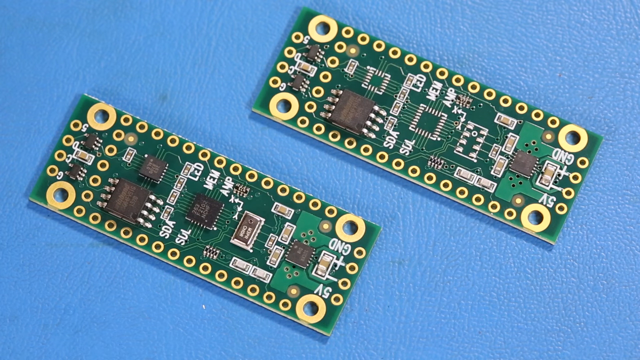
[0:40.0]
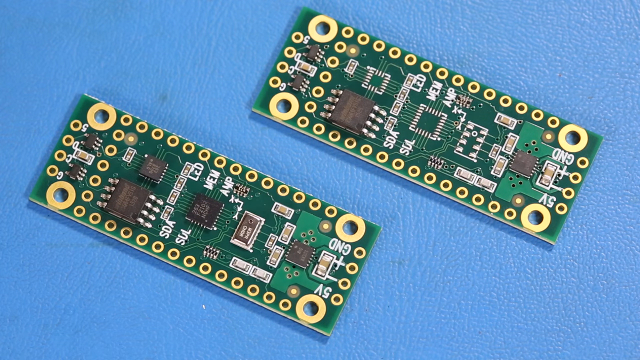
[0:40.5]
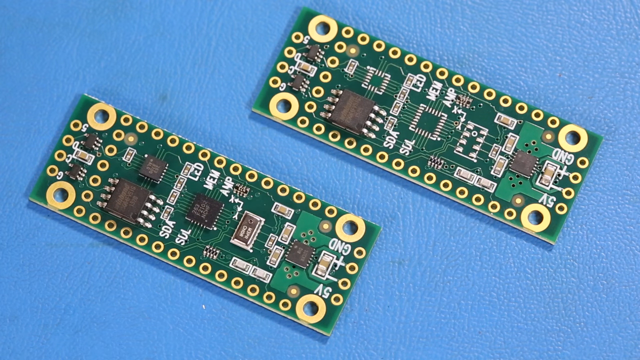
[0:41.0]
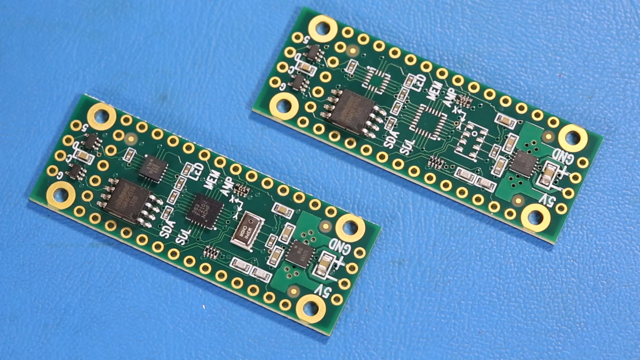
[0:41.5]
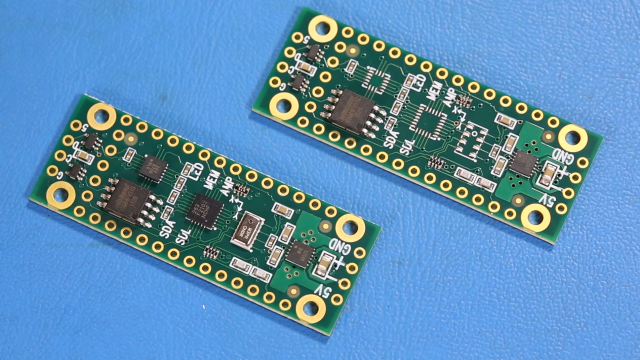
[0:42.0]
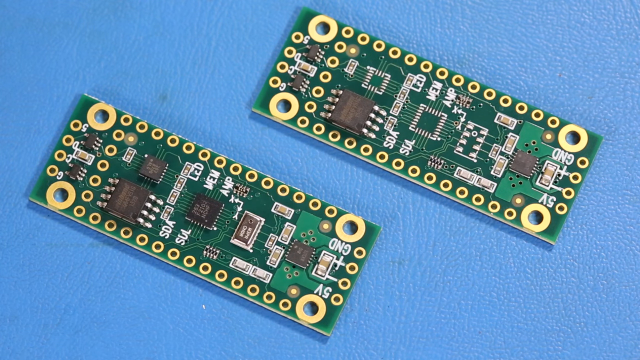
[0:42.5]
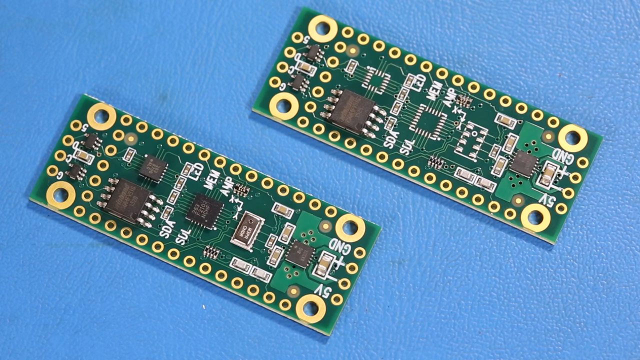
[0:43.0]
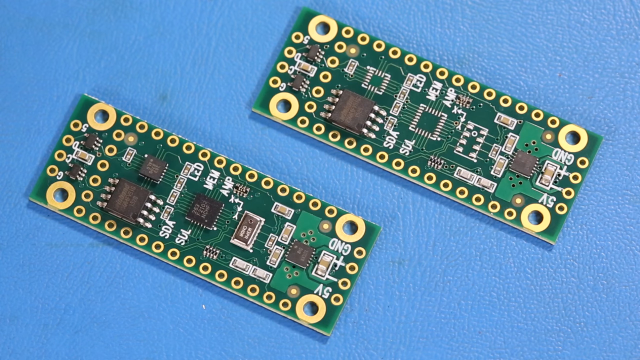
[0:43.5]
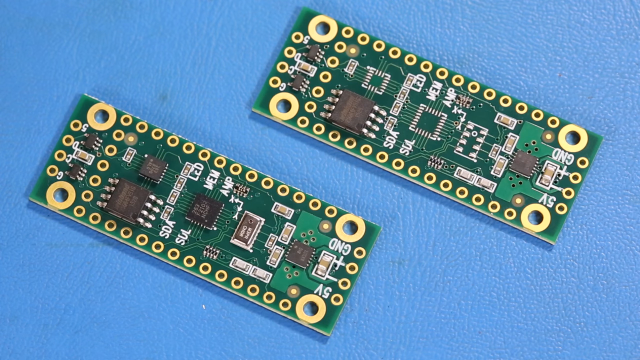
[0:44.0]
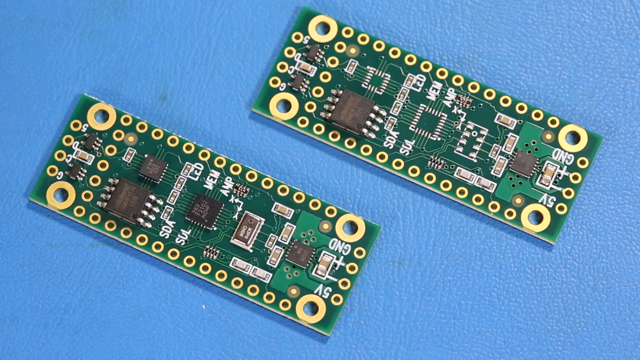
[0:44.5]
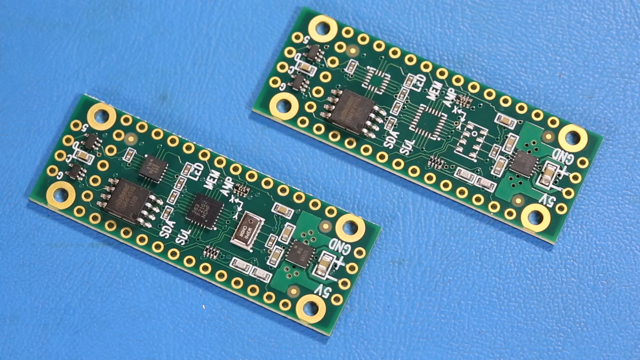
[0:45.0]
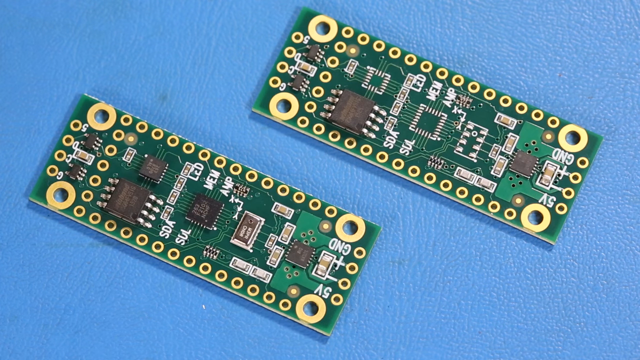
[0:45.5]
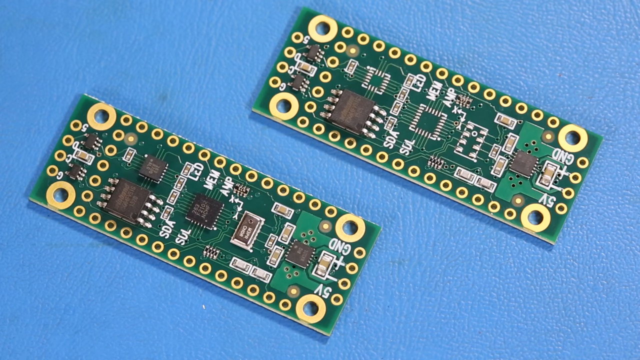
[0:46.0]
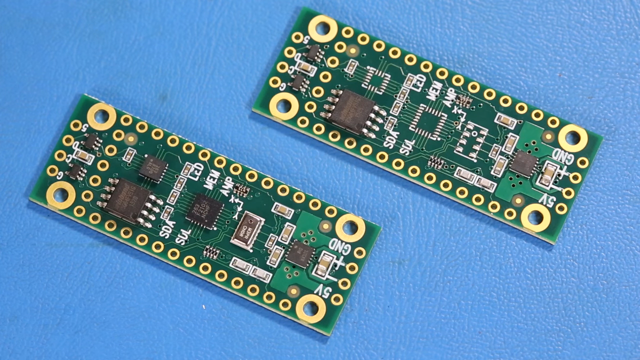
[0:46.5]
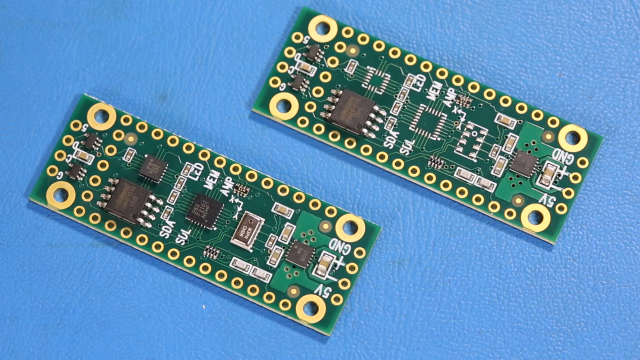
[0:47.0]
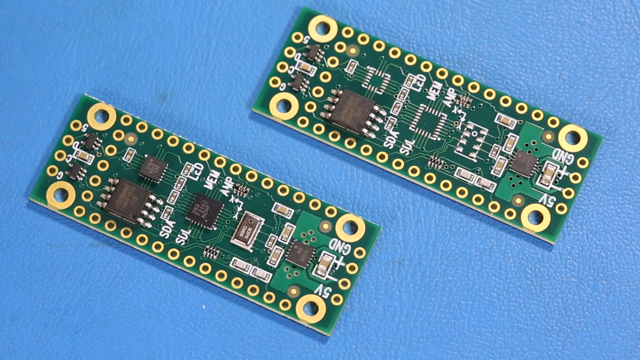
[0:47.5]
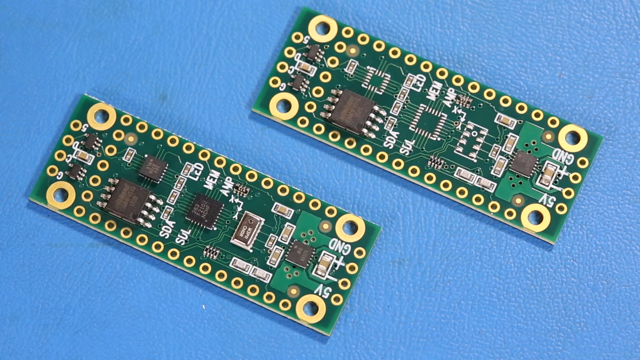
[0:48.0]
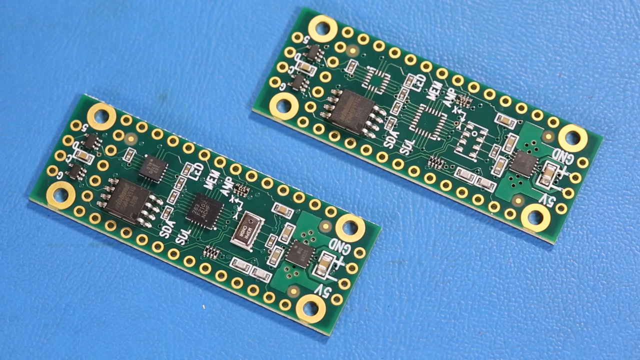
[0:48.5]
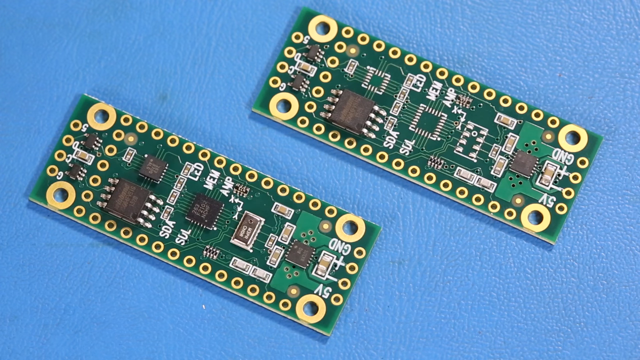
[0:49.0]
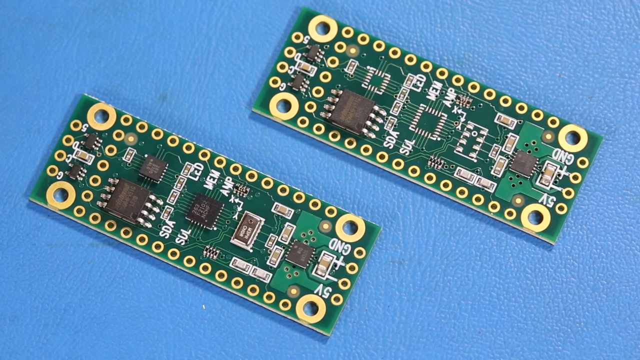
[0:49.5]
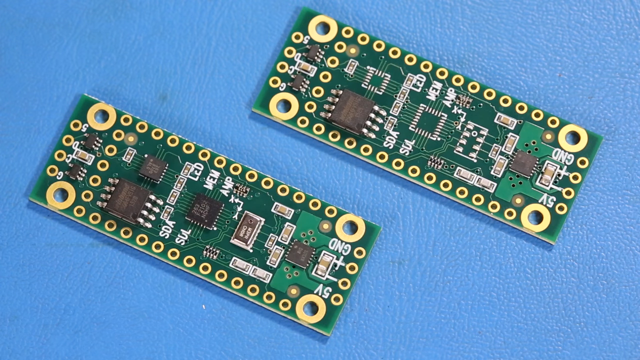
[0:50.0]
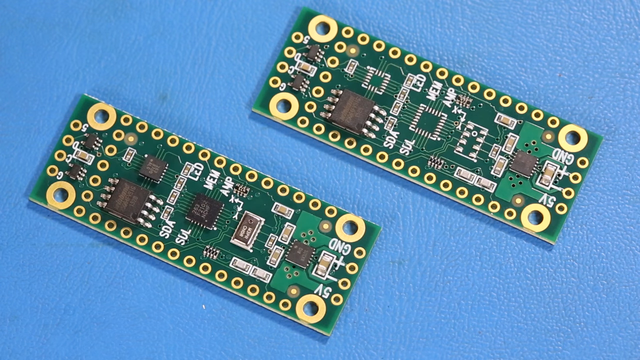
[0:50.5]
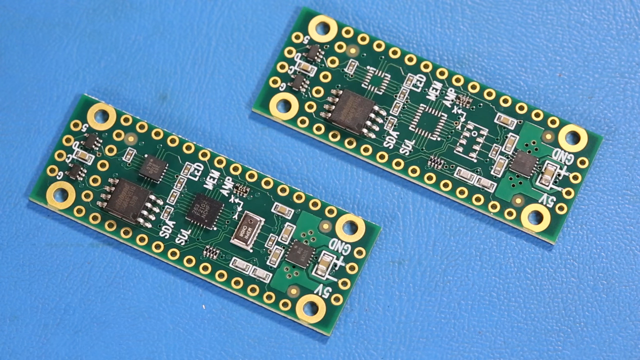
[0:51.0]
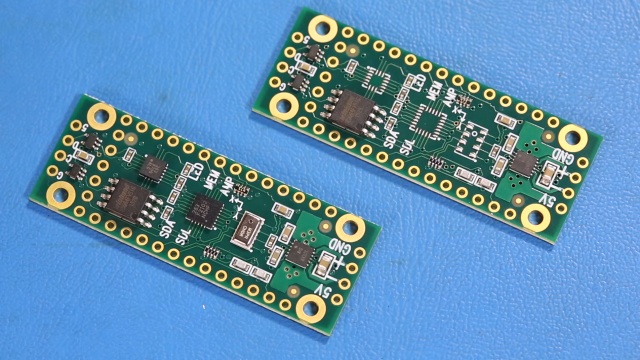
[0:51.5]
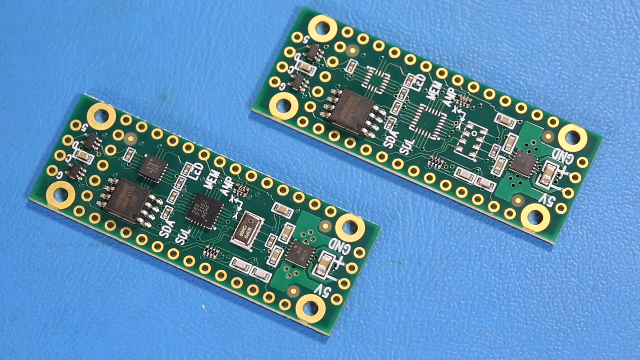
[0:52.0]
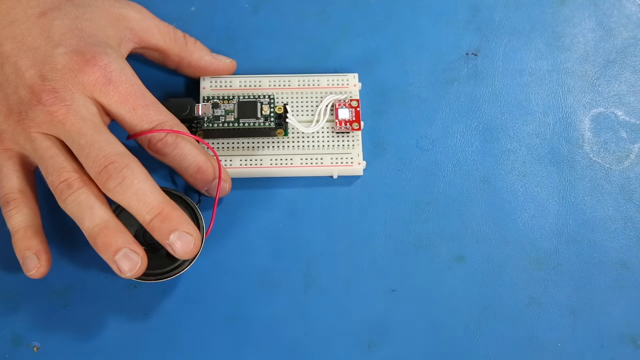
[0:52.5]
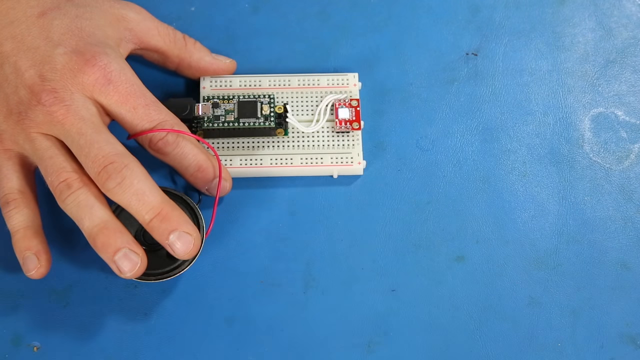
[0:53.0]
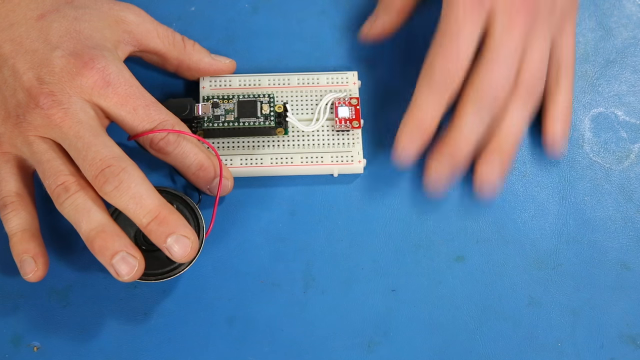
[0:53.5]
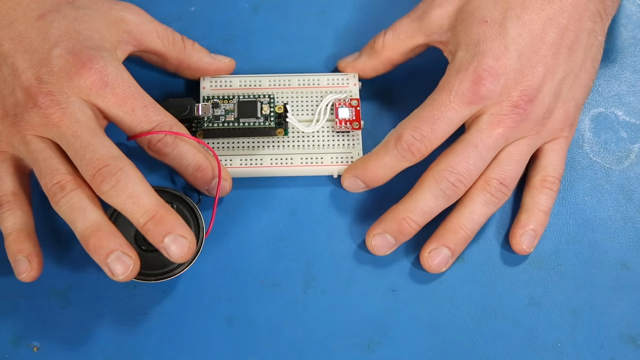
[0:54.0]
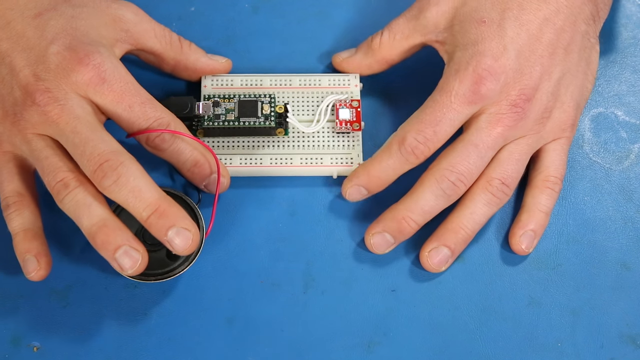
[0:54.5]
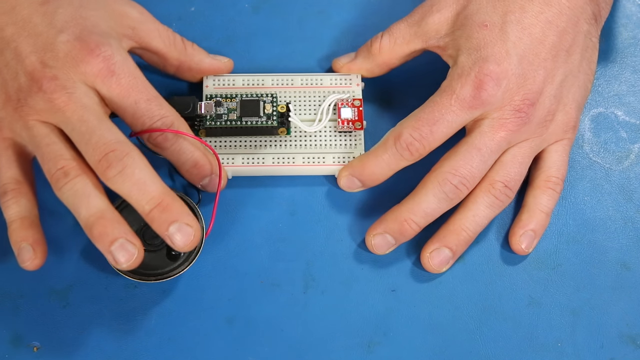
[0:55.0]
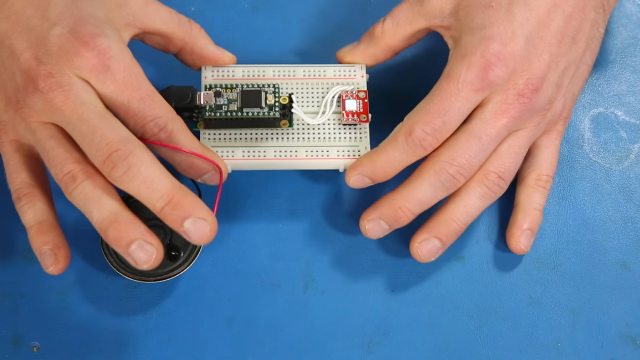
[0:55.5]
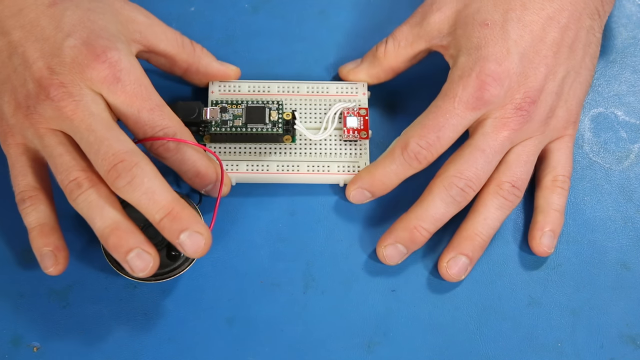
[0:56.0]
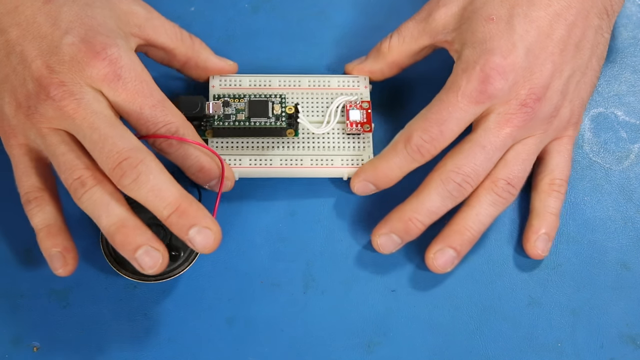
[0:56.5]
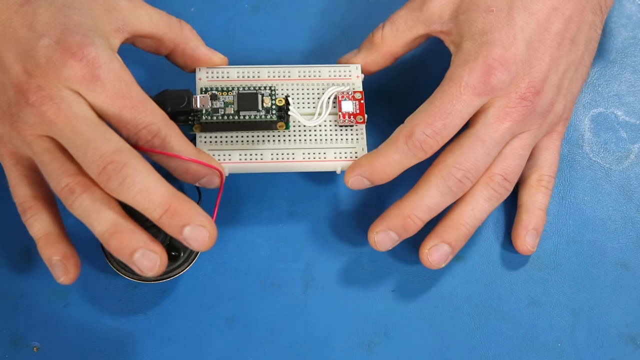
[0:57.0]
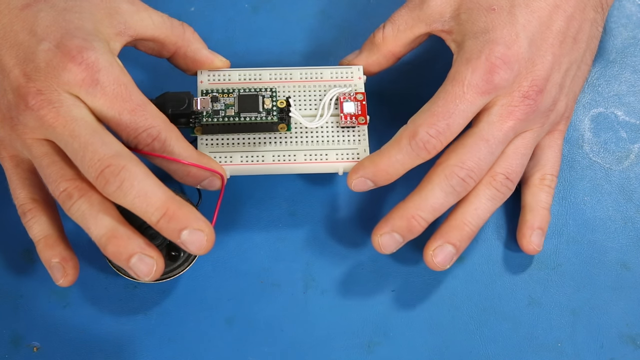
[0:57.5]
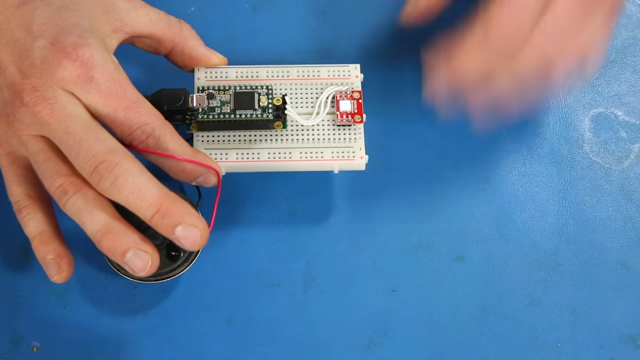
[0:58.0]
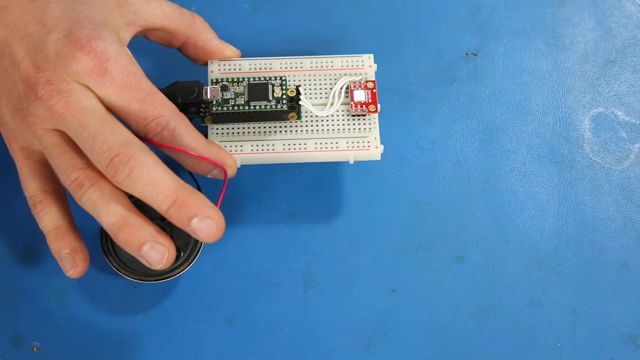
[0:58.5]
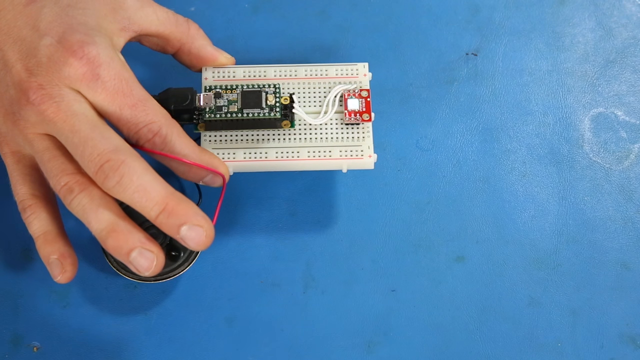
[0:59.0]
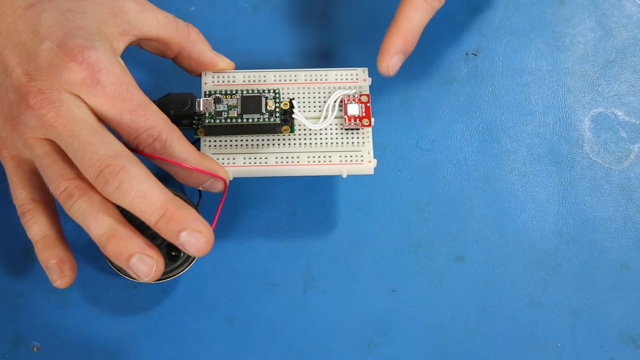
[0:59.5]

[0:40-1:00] Two green circuit boards with many different components lie on a blue desk with a textured design. The camera swipes to a new shot, again of the blue textured desk, with a dent on the right-hand side that refracts the light. On the left-hand side a man's hand appears, holding a device with wires coming out of it, little holes and various chips connected together. His other hand comes down from the right-hand side and holds the other end of the device he is presenting. He lifts the device up, puts it down, lifts it up again, and pulls his right hand away from it. His right hand goes off screen, and then a finger from that hand returns, pointing to the device.